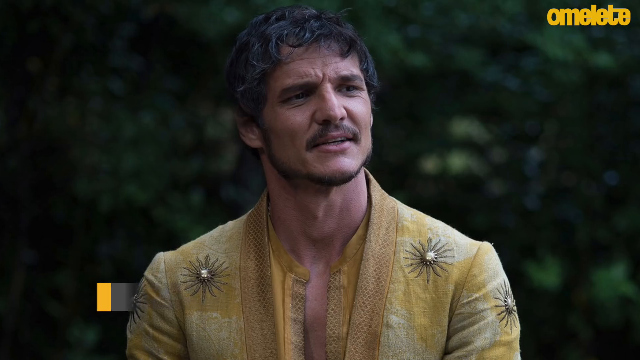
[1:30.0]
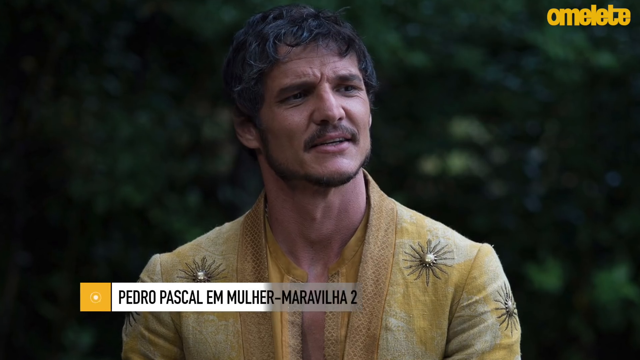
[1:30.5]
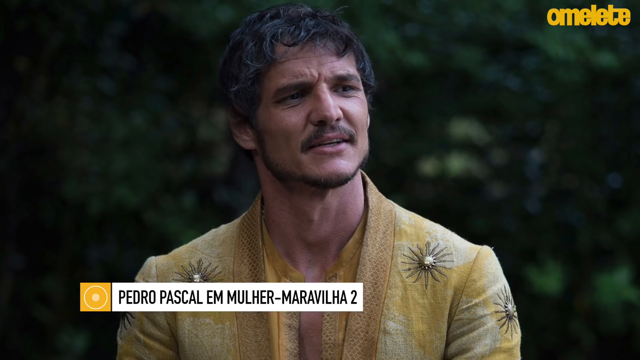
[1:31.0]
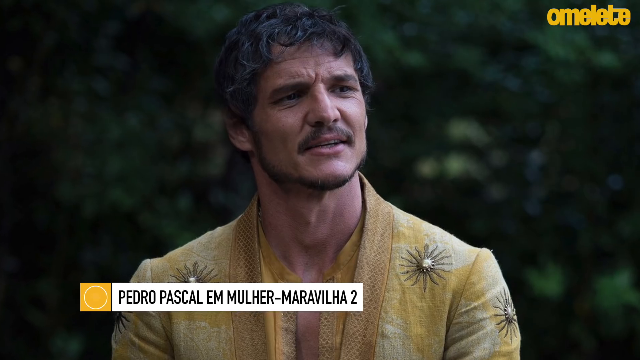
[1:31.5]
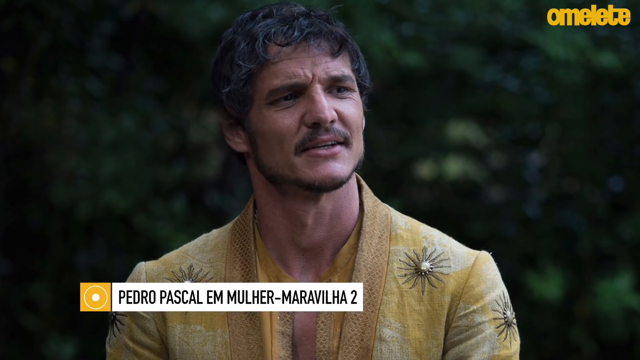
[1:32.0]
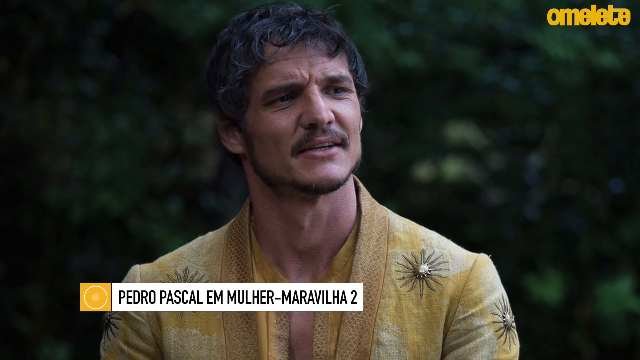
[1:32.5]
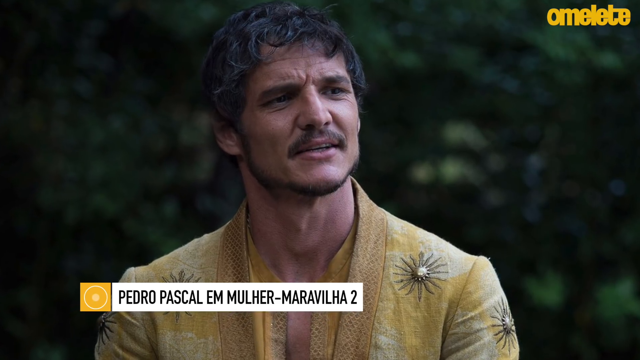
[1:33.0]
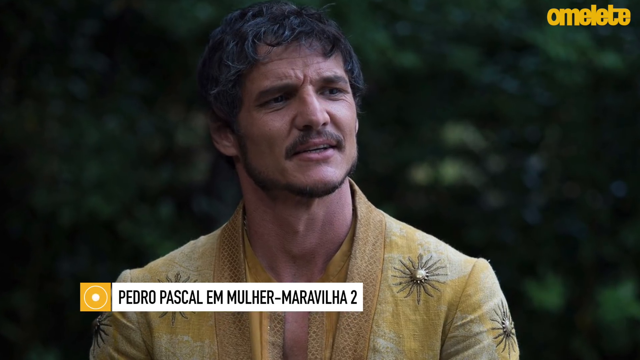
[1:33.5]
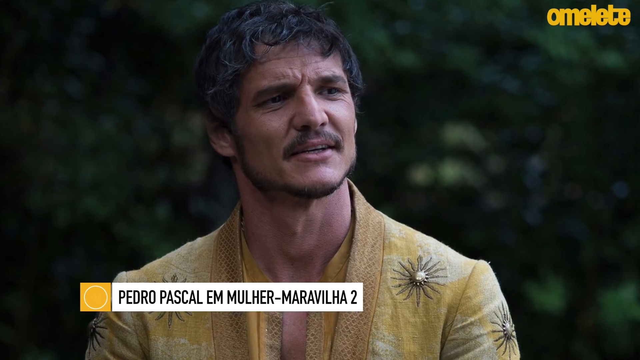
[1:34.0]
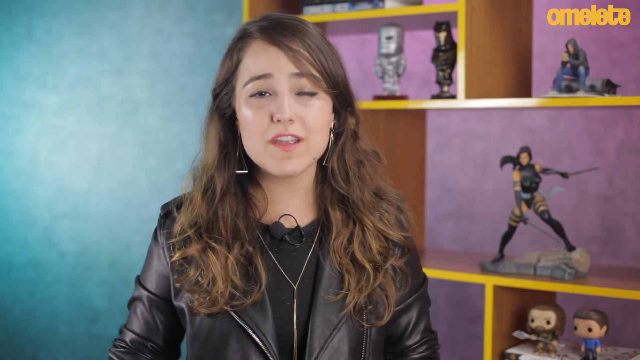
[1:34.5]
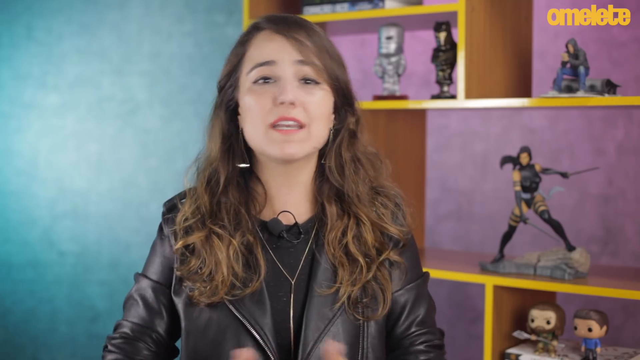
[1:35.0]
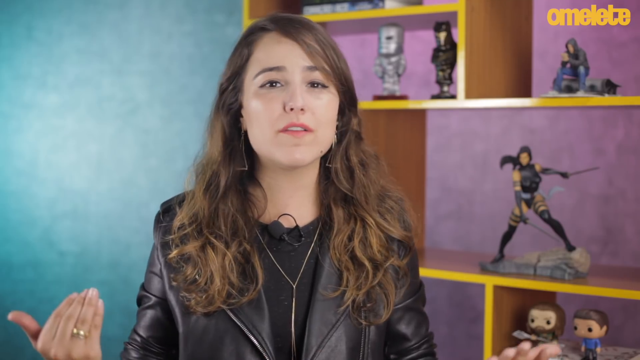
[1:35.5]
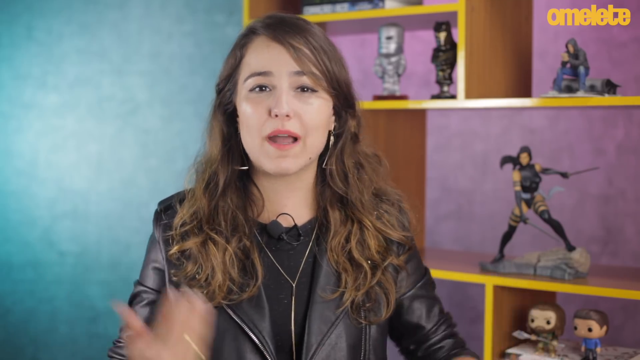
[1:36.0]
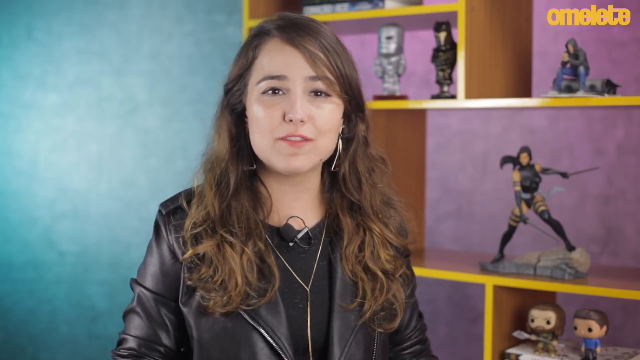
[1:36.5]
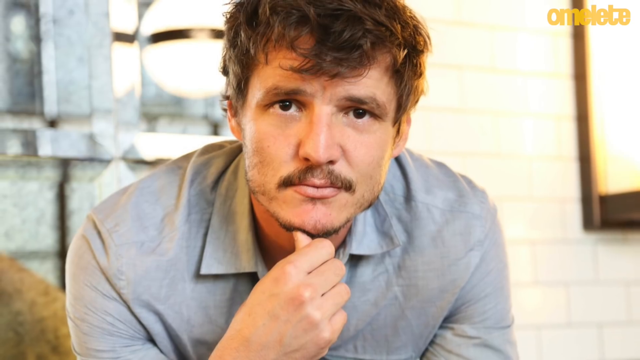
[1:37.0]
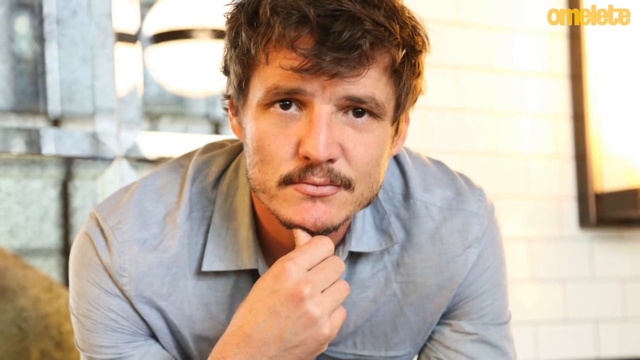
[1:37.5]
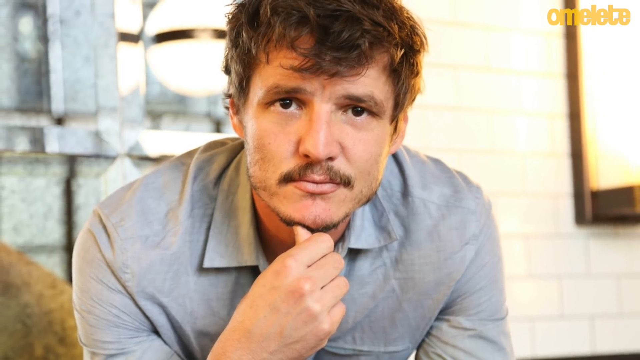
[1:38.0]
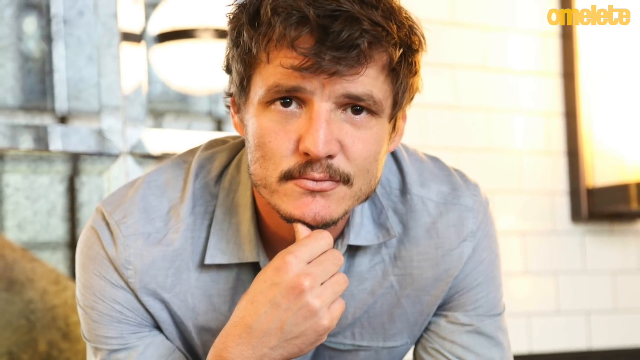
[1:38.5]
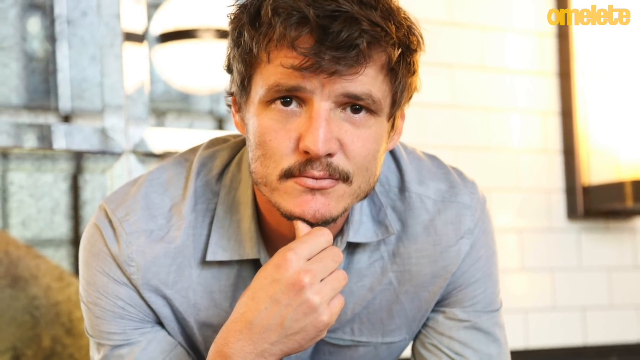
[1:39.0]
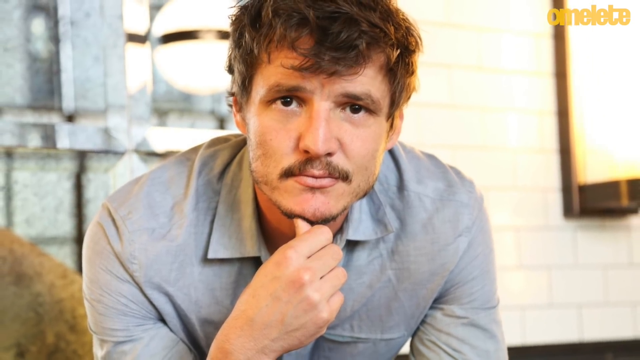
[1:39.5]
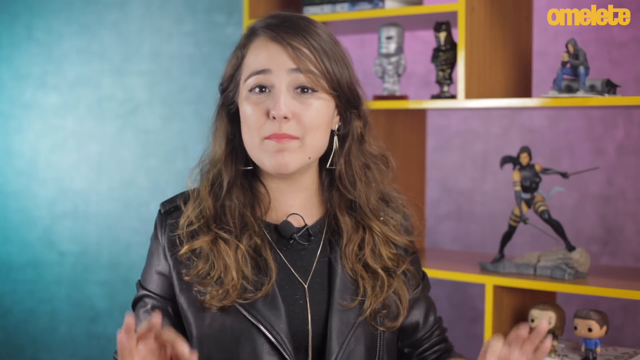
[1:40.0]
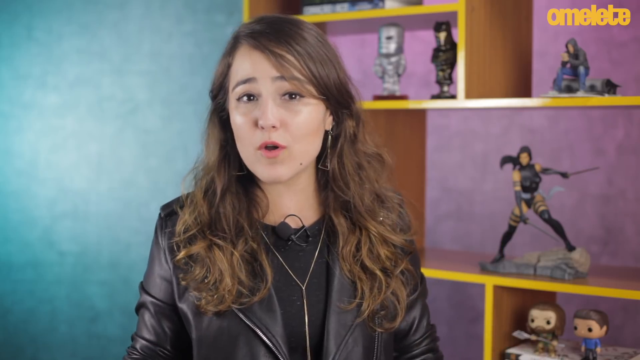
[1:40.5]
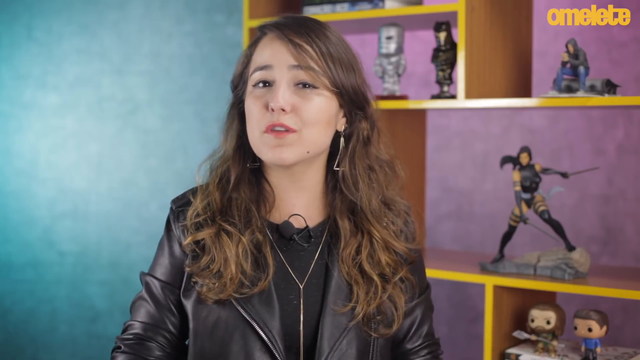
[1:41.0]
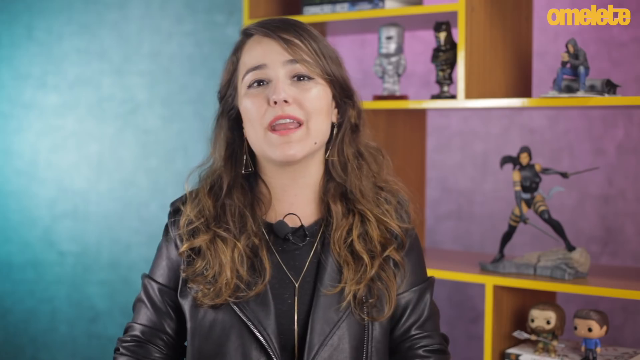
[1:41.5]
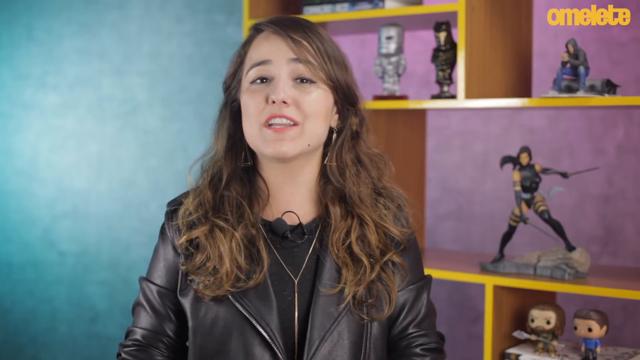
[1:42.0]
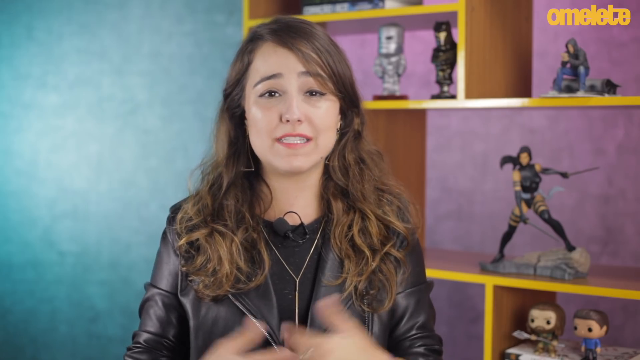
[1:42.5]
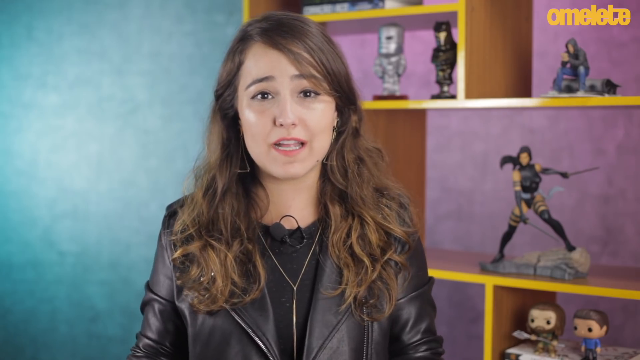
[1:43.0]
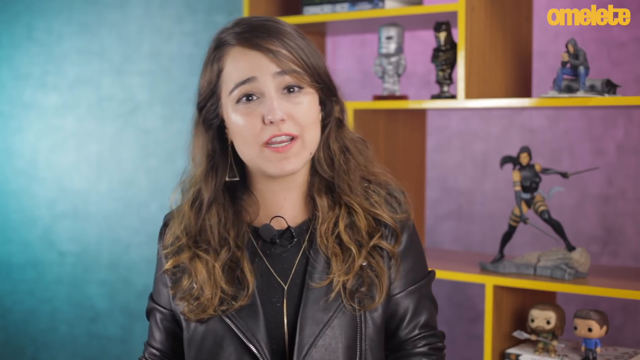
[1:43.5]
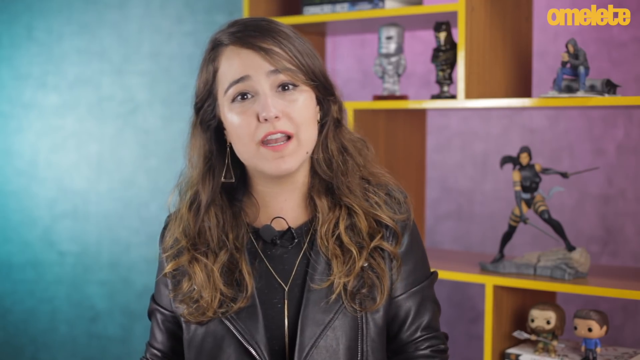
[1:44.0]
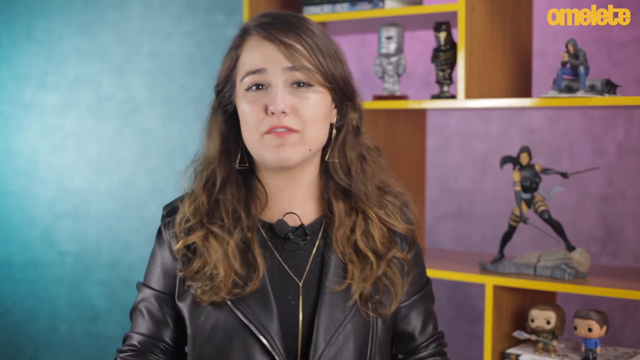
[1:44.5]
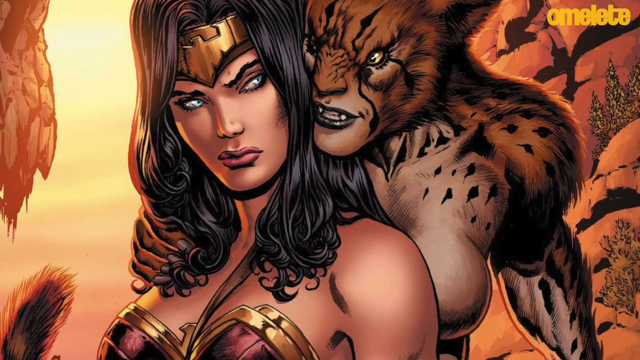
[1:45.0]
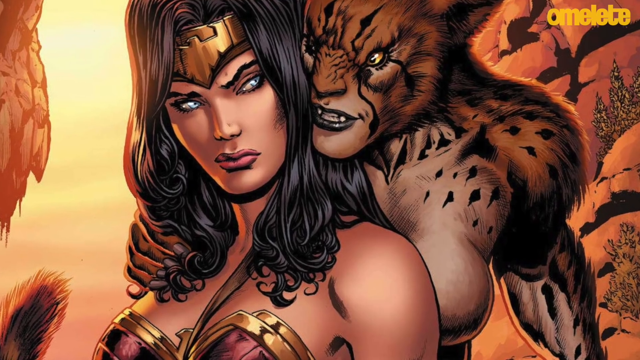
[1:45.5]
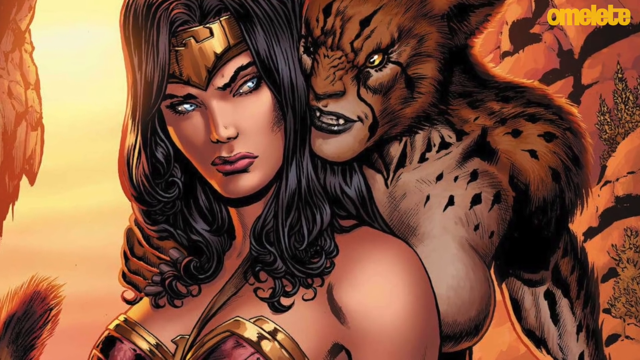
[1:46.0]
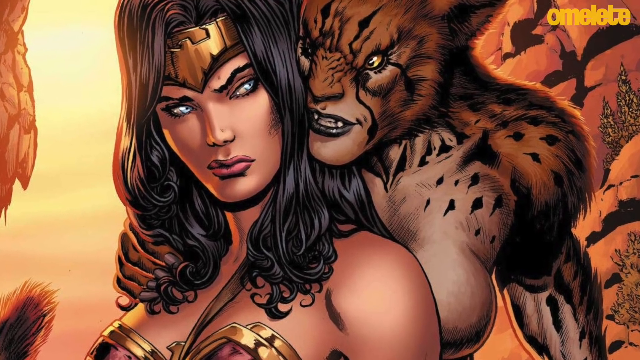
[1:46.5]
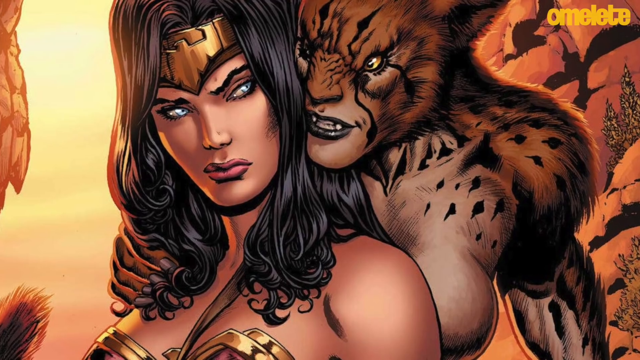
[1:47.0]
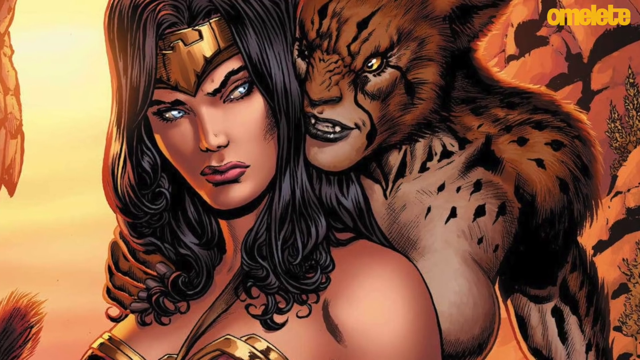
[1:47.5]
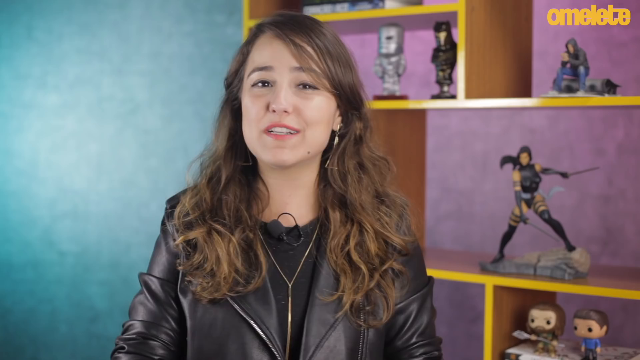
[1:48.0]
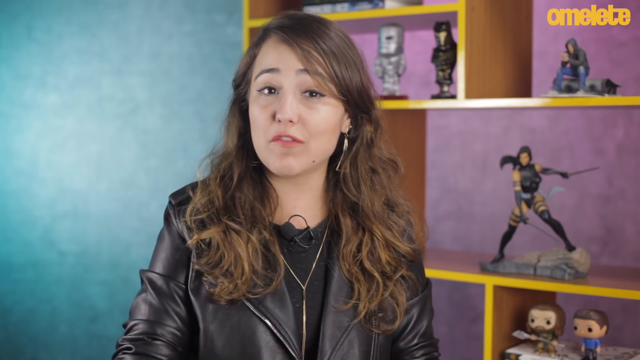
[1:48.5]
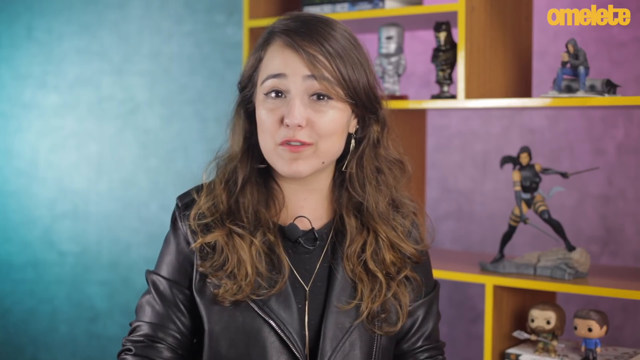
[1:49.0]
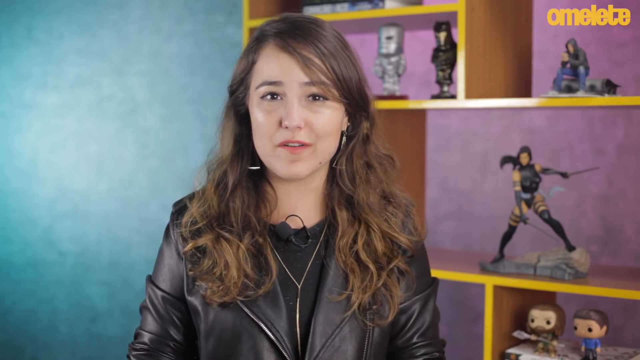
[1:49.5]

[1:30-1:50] The man in what appears to be a gold or yellow top, apparently the actor Pedro Pascal, appears briefly with a caption. The video switches back to the woman talking to the camera, then to Pedro Pascal in a light blue shirt staring at the camera, then briefly back to the woman. Next is an animated picture of a female character who seems to be standing with a tiger behind her; the tiger seems to have a personality, looking with a face like a human being. The video returns to the woman talking to the camera; she seems to be critiquing movies, comparing them based on their scenes.